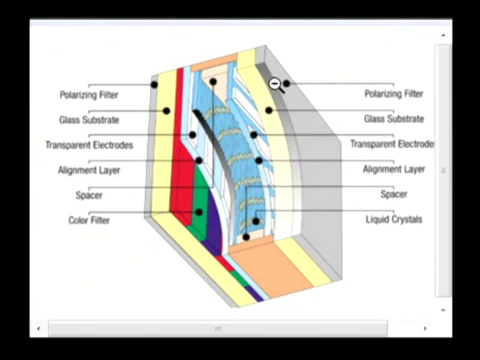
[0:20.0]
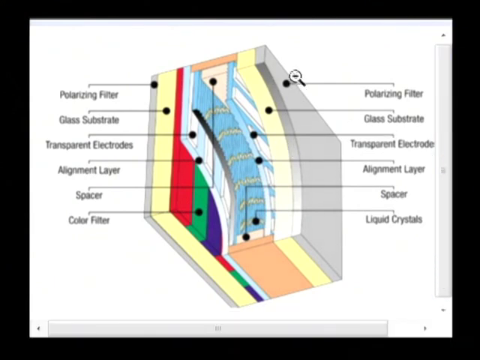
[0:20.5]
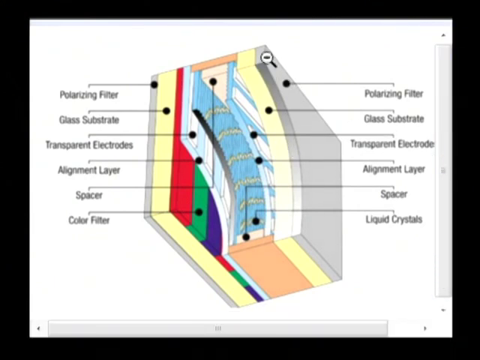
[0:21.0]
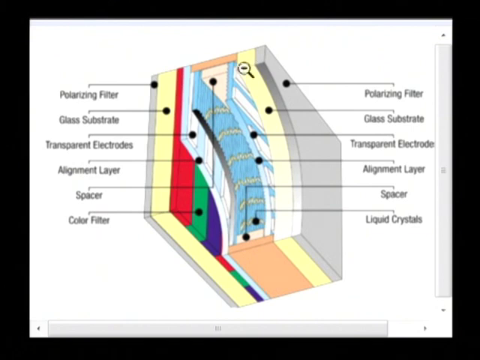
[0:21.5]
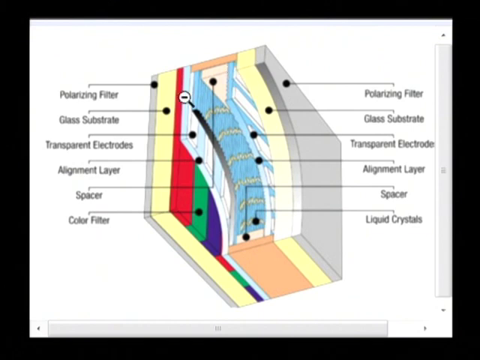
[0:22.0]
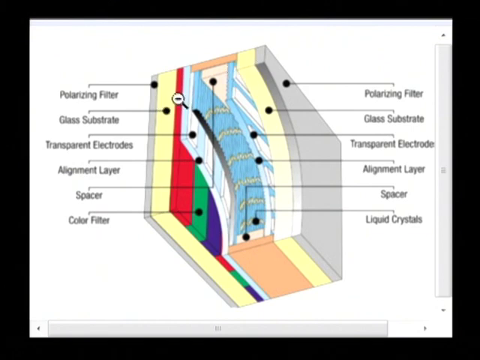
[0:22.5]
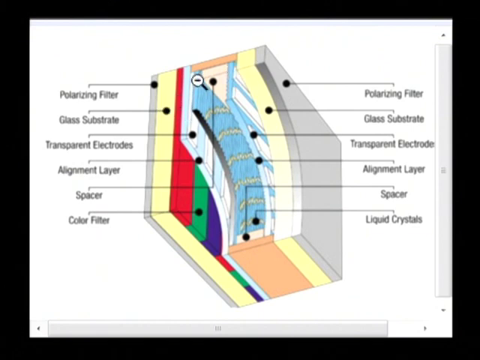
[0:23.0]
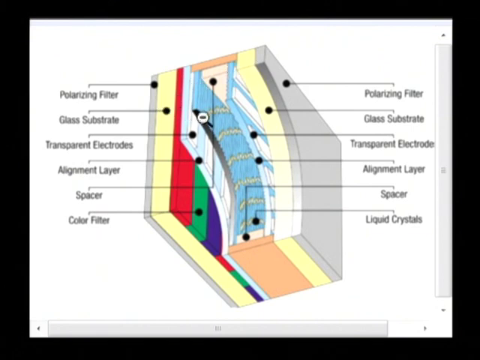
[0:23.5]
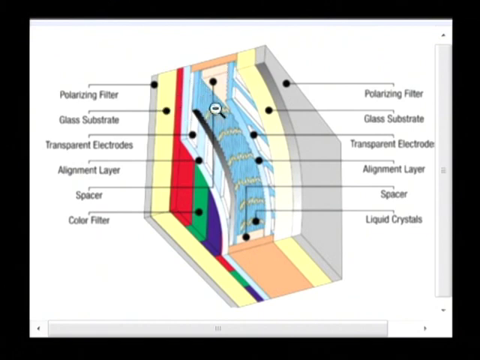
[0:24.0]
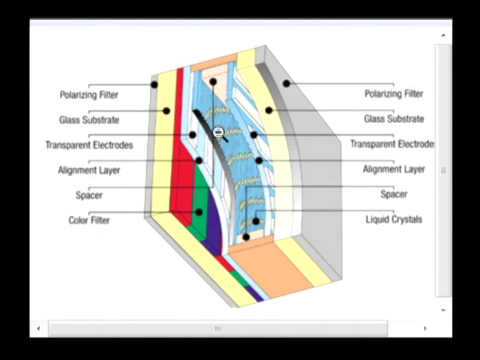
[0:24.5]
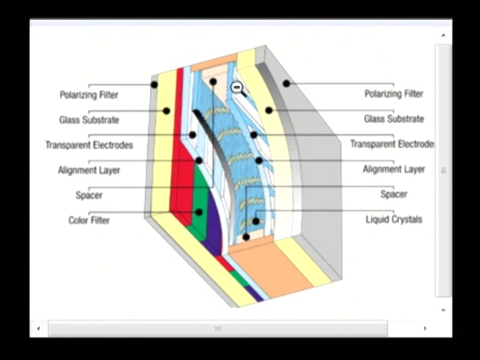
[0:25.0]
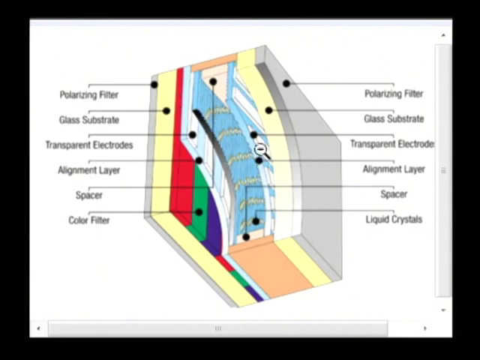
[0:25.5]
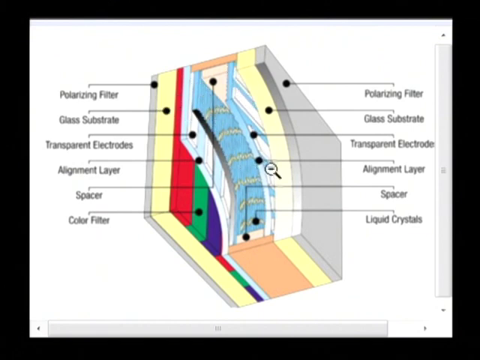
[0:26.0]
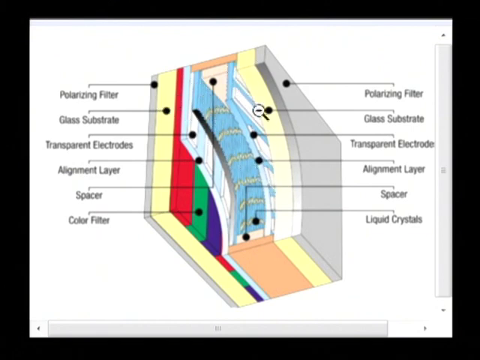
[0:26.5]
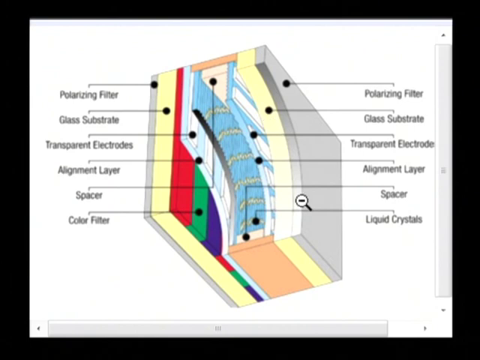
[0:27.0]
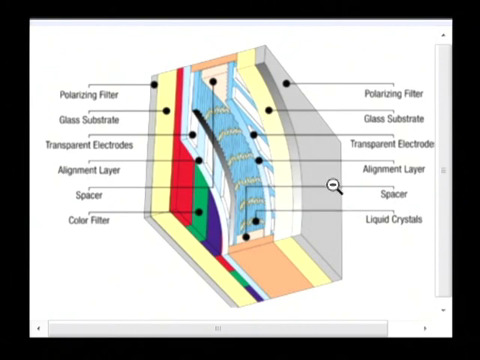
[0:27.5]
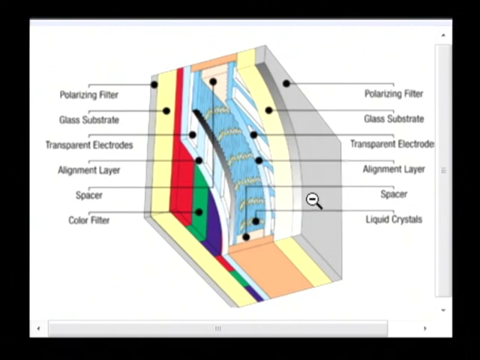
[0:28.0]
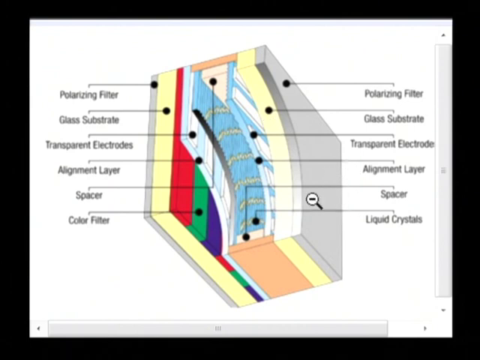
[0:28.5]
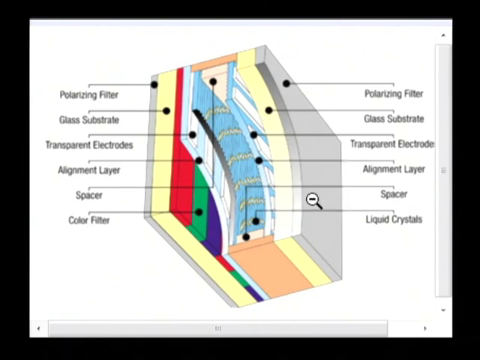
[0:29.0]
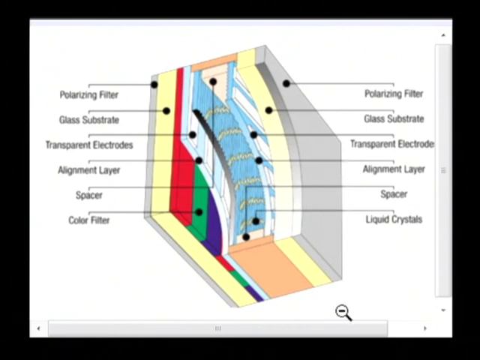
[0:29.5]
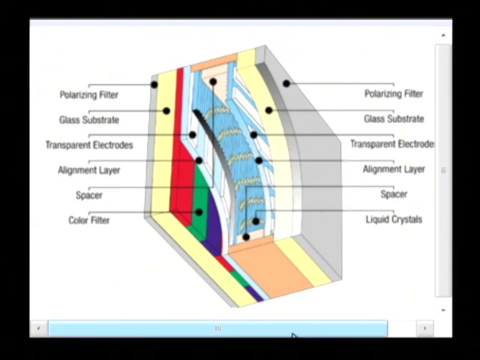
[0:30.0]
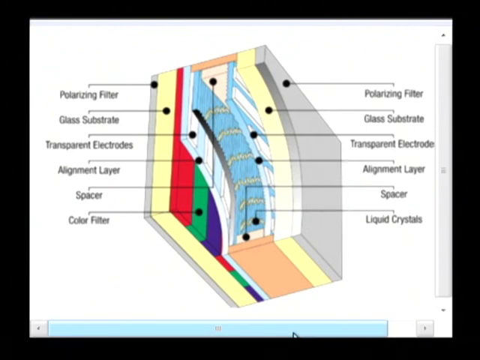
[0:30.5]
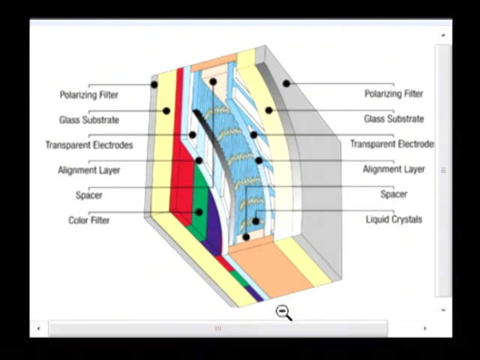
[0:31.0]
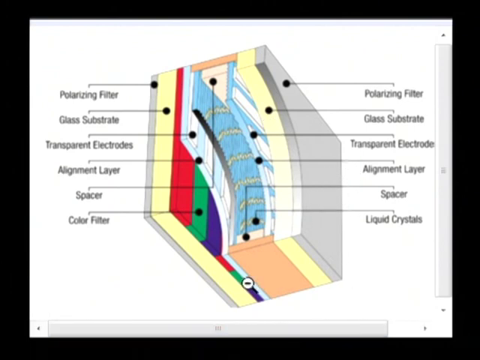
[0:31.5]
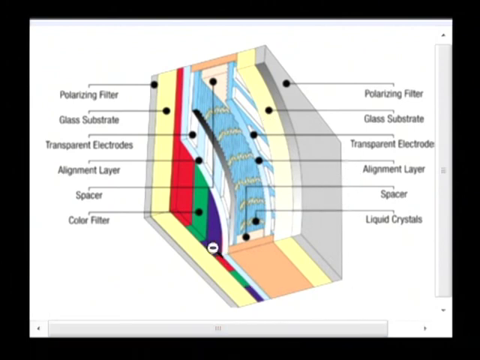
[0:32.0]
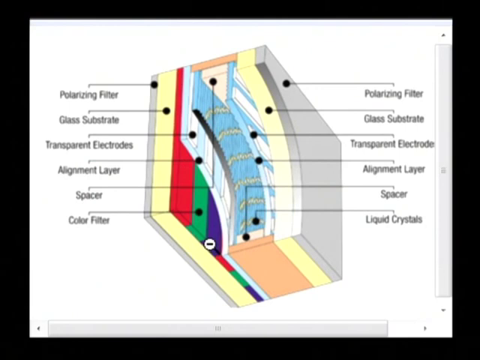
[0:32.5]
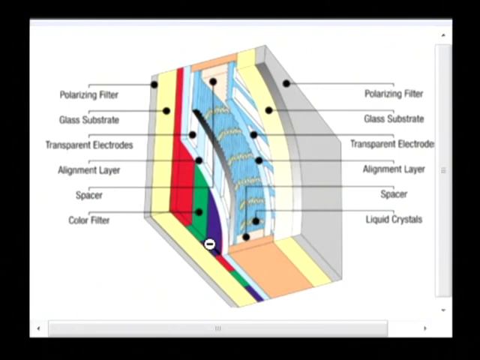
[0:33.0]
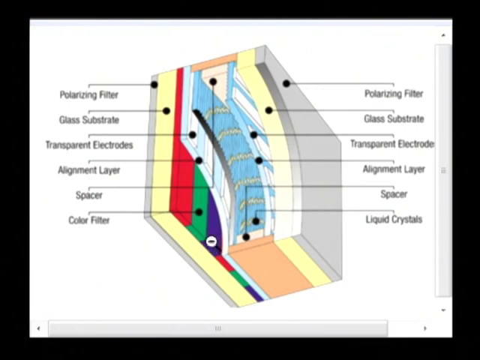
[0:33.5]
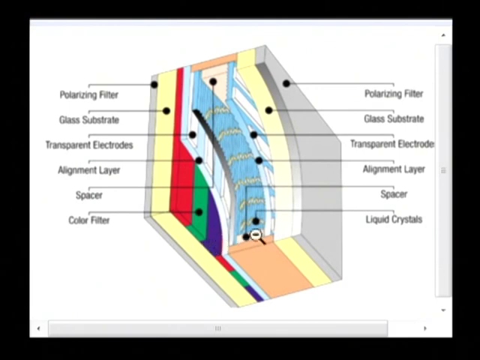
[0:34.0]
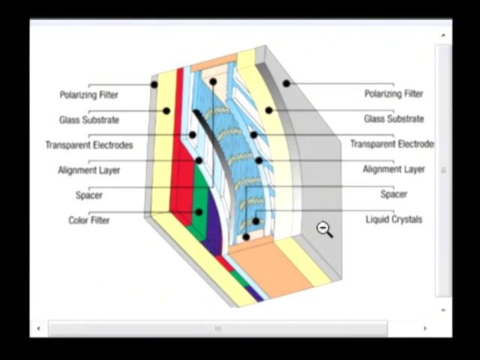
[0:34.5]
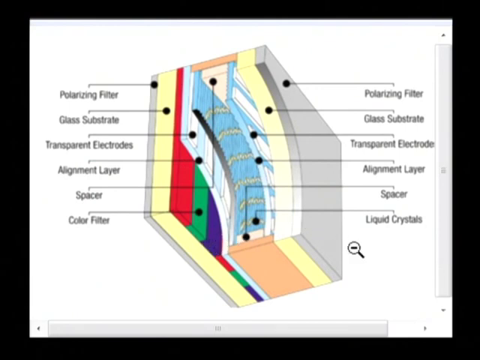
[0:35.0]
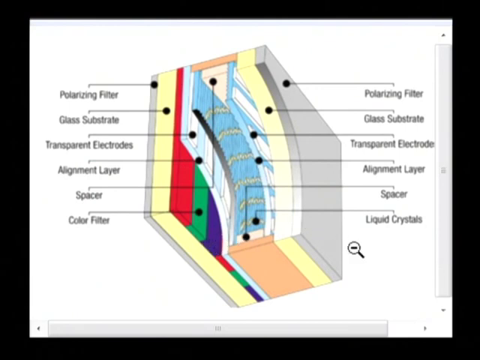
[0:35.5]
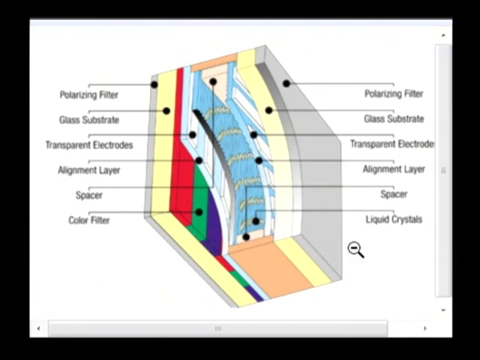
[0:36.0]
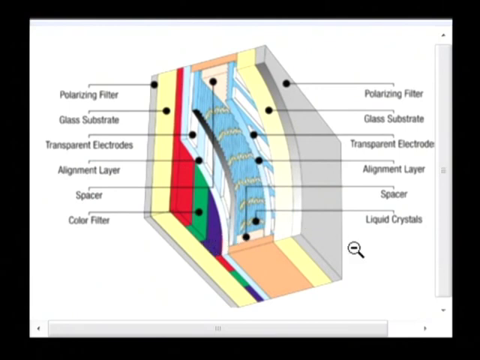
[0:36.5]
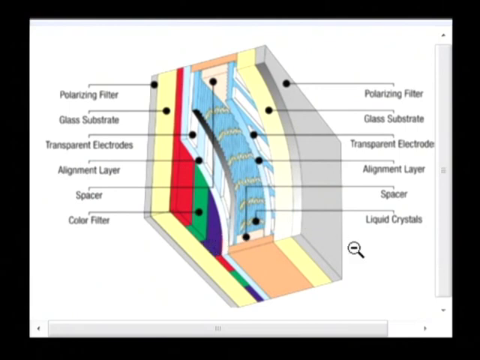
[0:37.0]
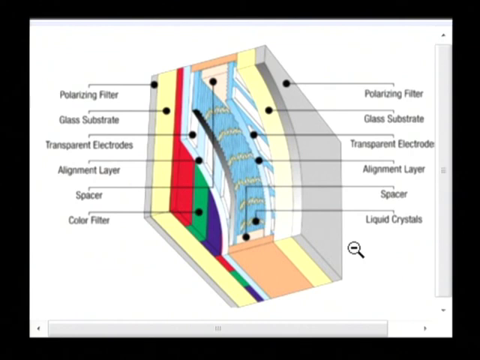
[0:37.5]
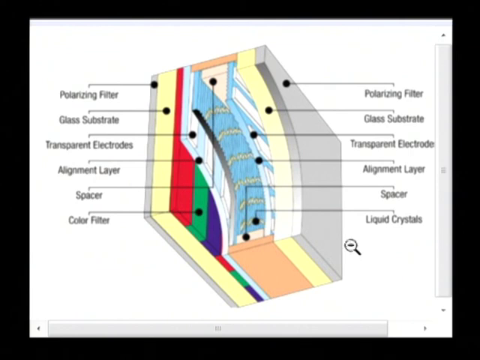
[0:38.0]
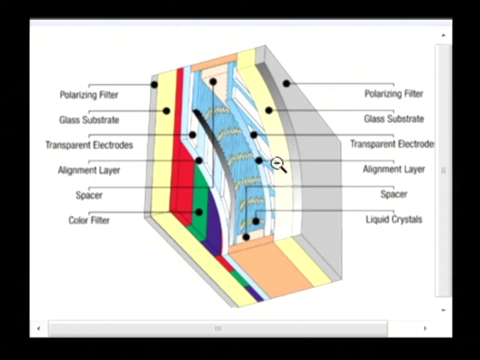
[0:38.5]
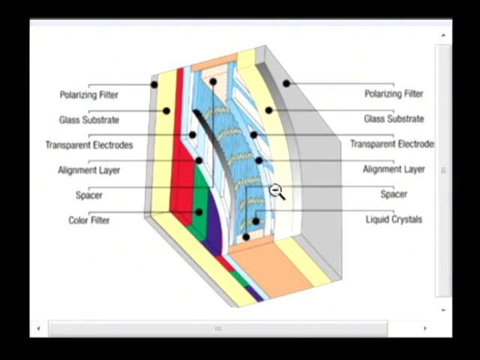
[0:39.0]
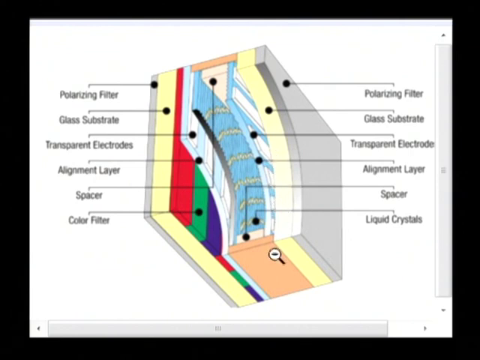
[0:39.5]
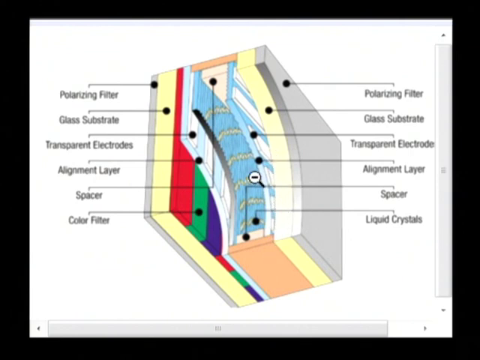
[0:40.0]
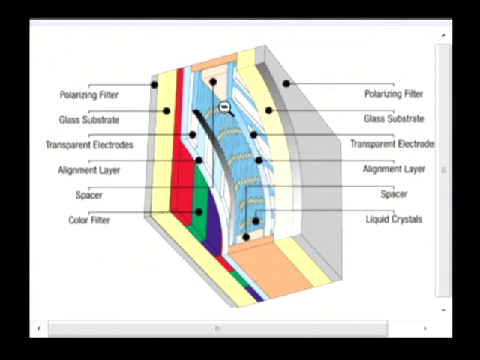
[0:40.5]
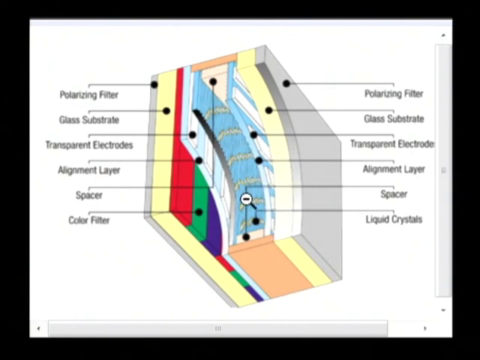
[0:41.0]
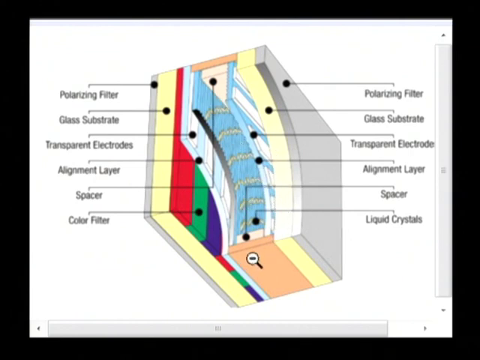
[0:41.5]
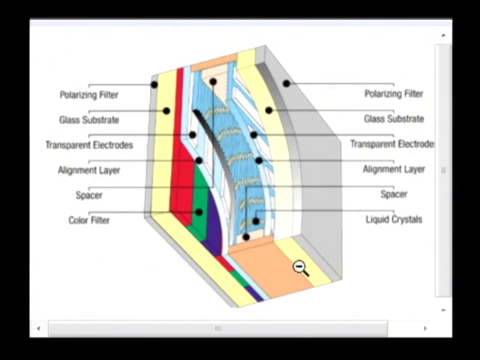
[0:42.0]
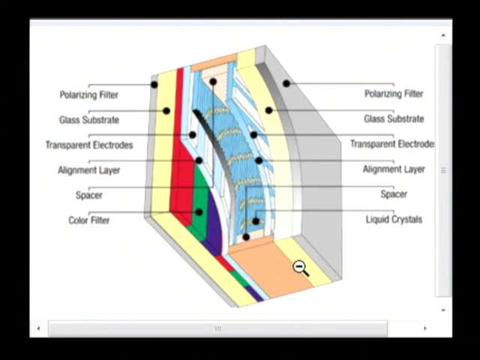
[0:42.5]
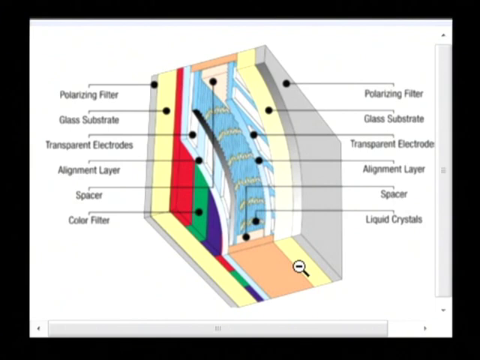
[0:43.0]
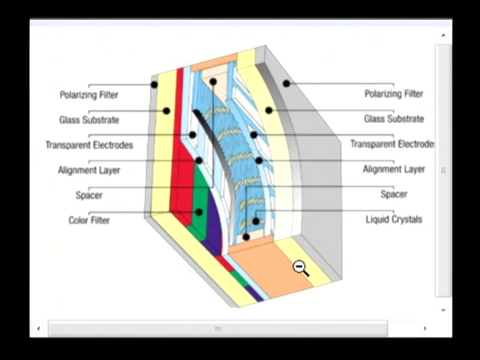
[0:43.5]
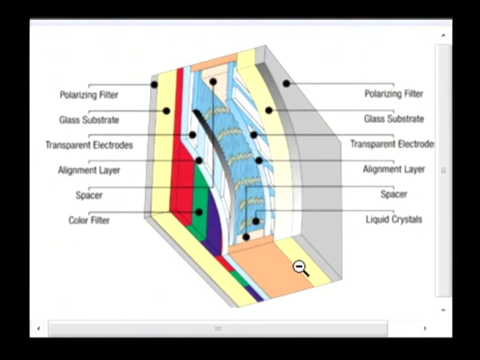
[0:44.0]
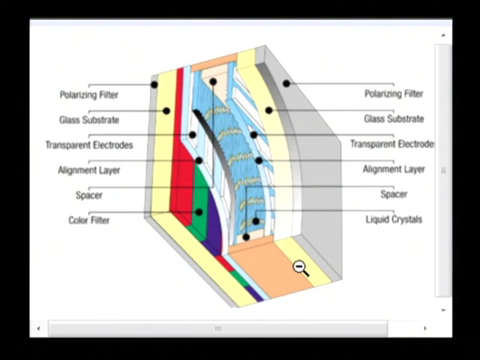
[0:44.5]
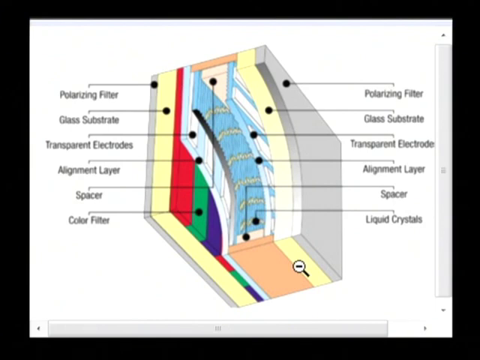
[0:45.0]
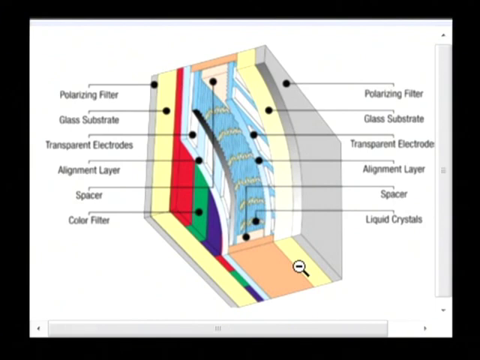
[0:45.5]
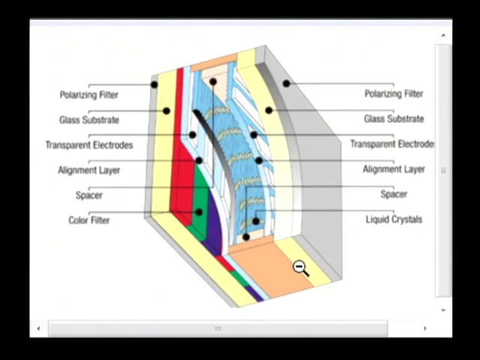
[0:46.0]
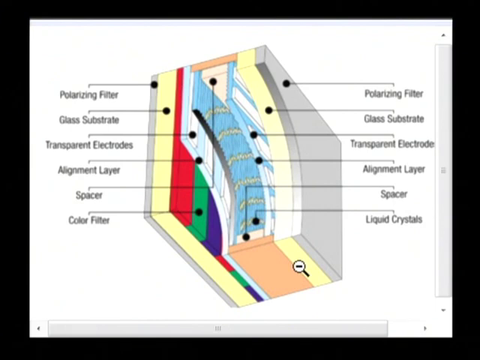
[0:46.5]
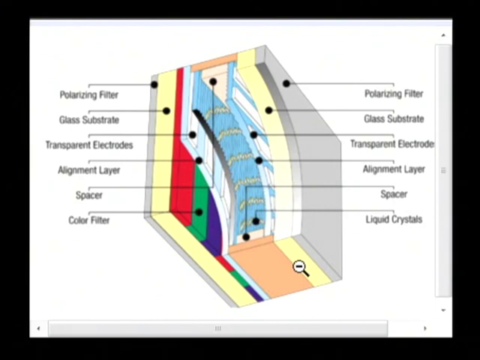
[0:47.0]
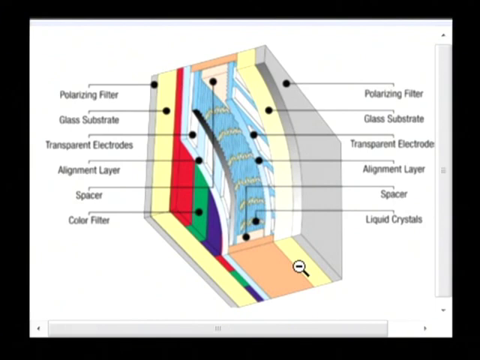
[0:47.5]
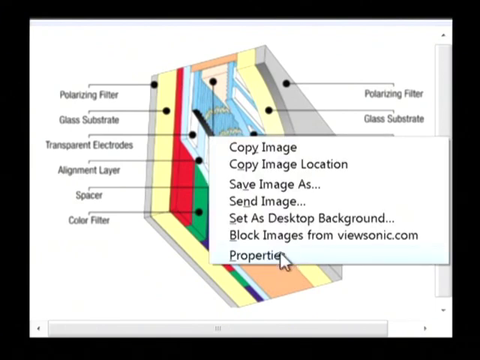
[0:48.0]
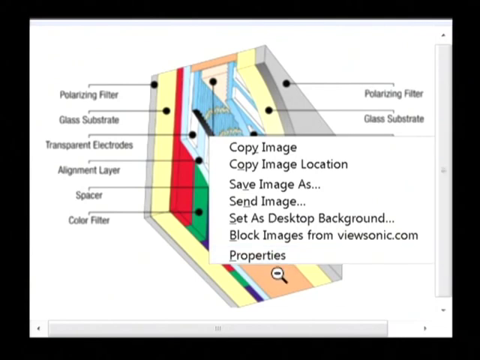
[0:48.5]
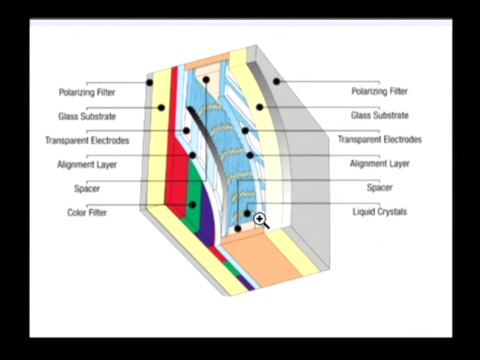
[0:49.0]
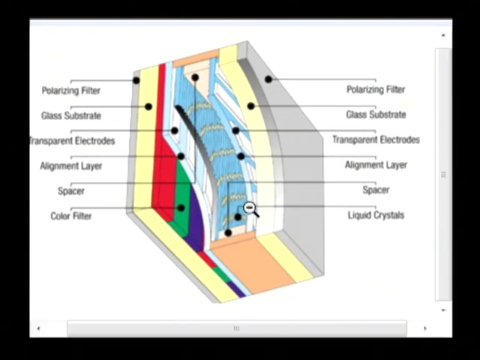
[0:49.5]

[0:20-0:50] The mouse cursor appears to be a zoom-out icon, a magnifying glass with a minus sign inside it. It moves around the image as if pointing to different elements within the diagram. The cursor moves to the bottom of the display and then back toward the diagram, as if pointing out more. He appears to click on something that opens a menu, possibly by mistake, since he exits it very quickly. The cursor goes down to the bottom of the screen again and hovers over the horizontal scroll bar without using it, then moves back toward the diagram. He appears to click something, as a menu opens up but disappears quickly.